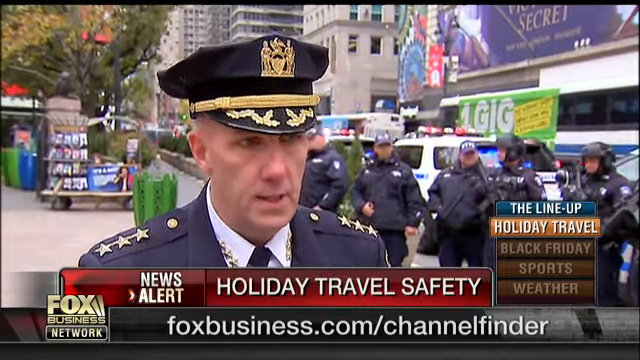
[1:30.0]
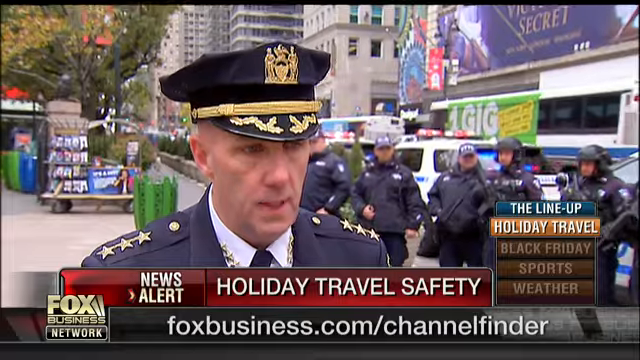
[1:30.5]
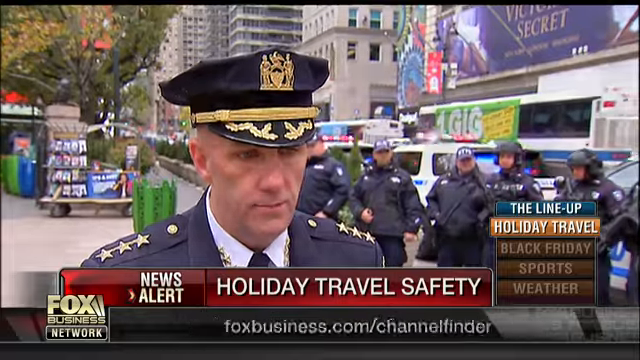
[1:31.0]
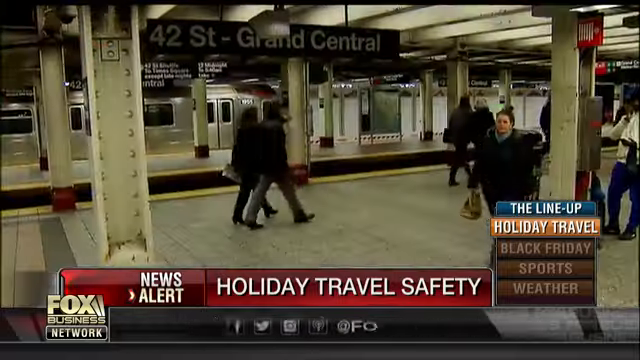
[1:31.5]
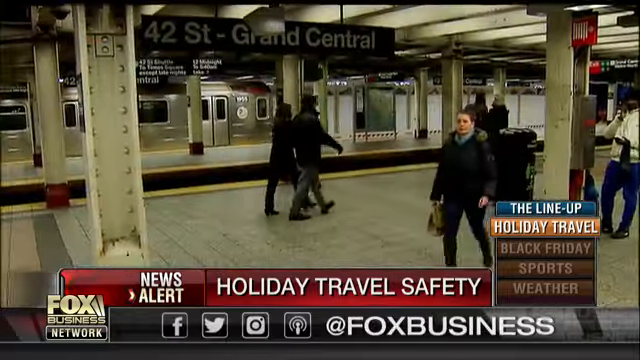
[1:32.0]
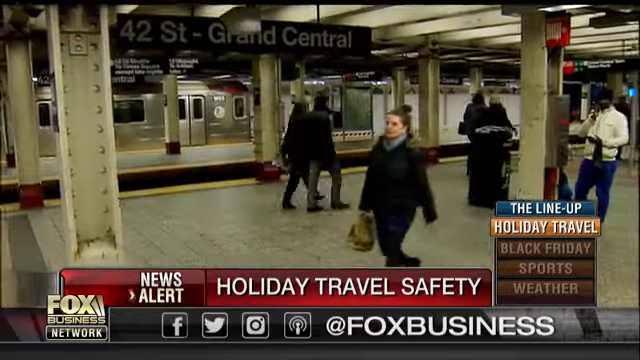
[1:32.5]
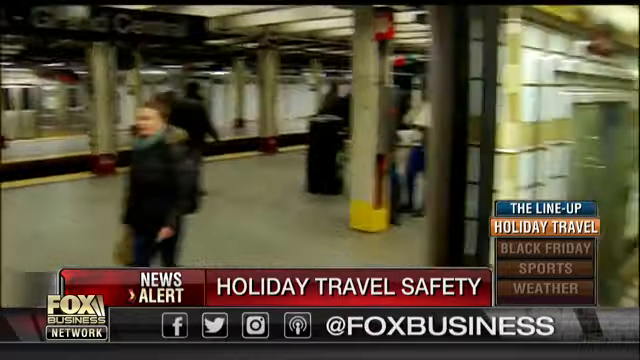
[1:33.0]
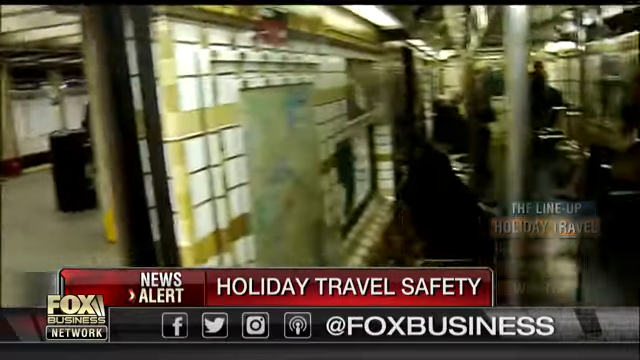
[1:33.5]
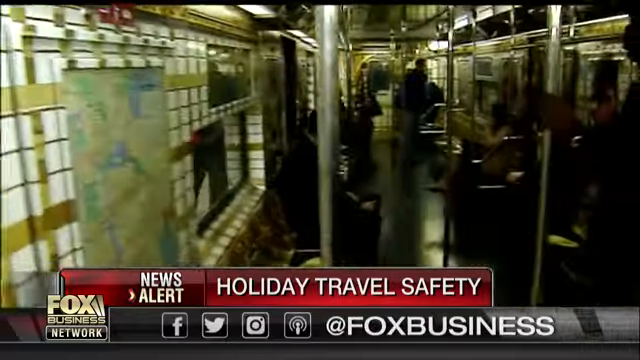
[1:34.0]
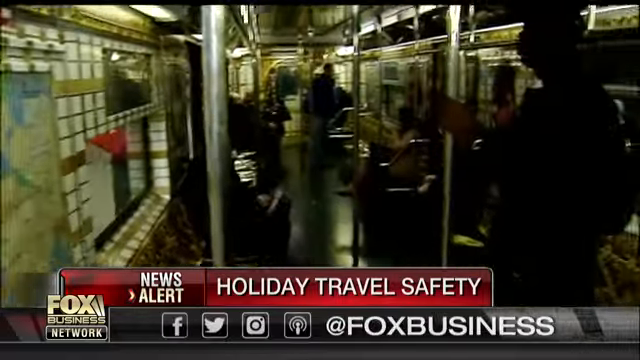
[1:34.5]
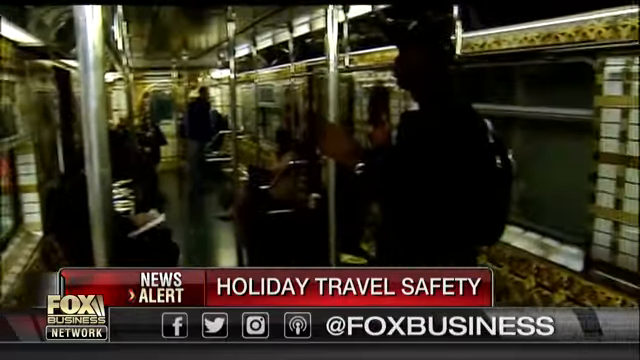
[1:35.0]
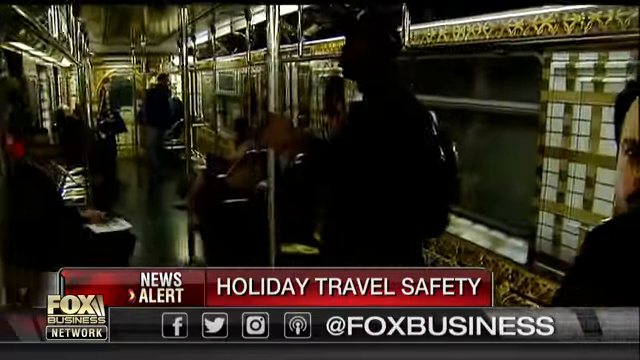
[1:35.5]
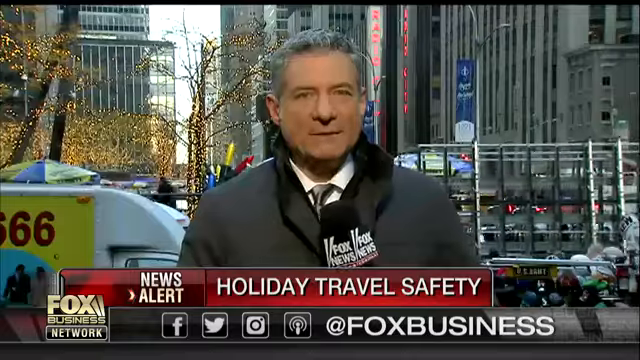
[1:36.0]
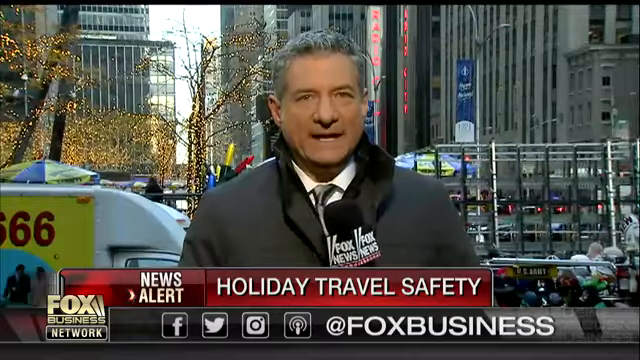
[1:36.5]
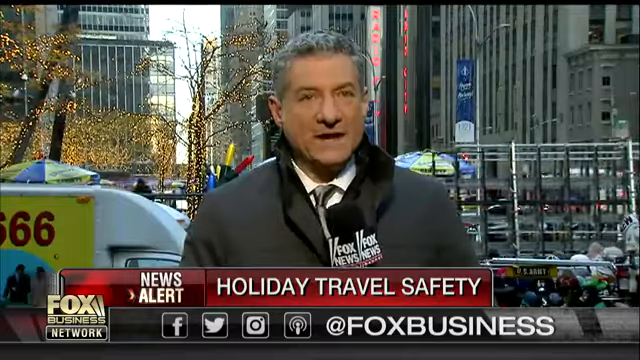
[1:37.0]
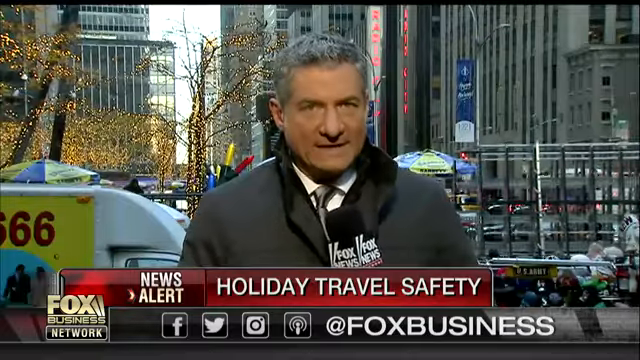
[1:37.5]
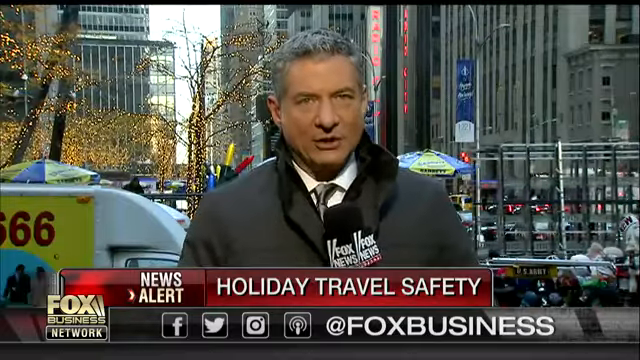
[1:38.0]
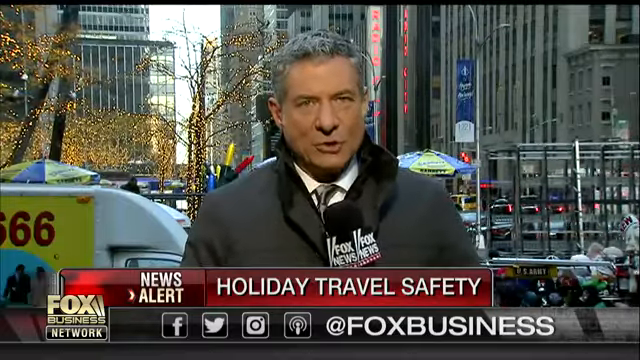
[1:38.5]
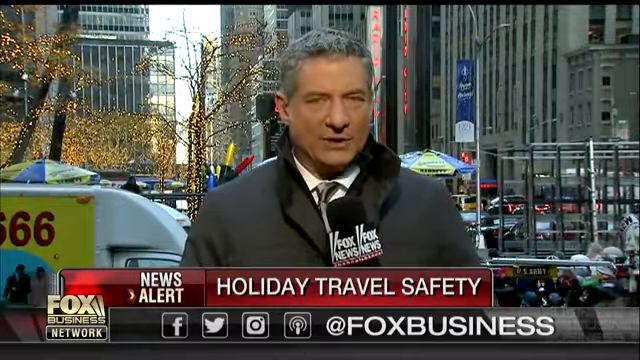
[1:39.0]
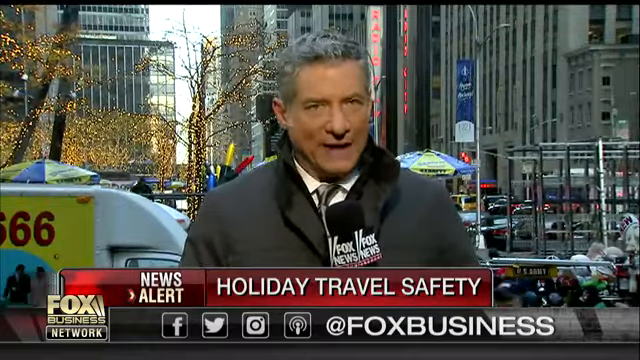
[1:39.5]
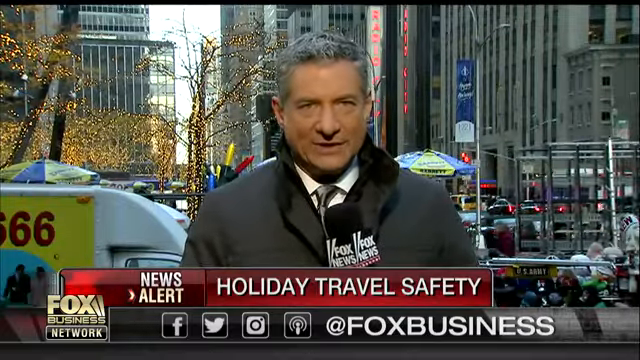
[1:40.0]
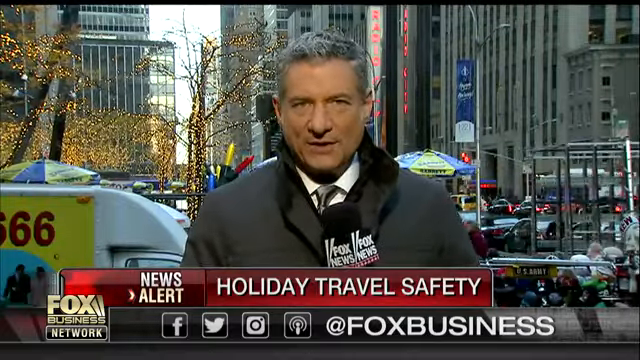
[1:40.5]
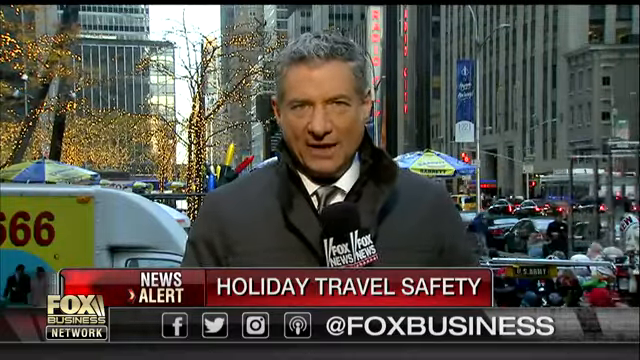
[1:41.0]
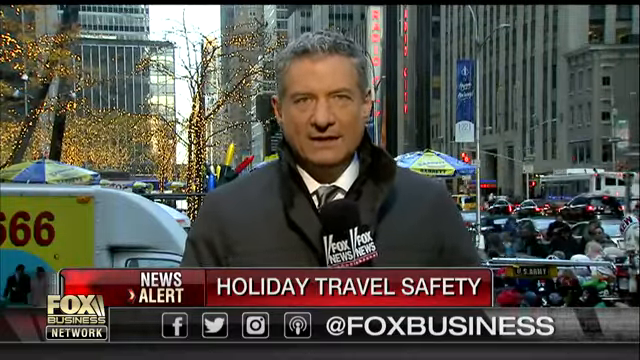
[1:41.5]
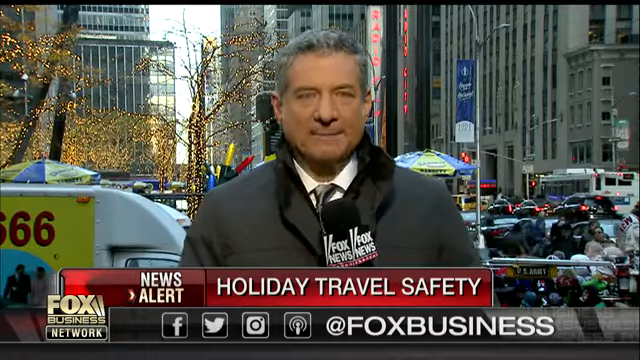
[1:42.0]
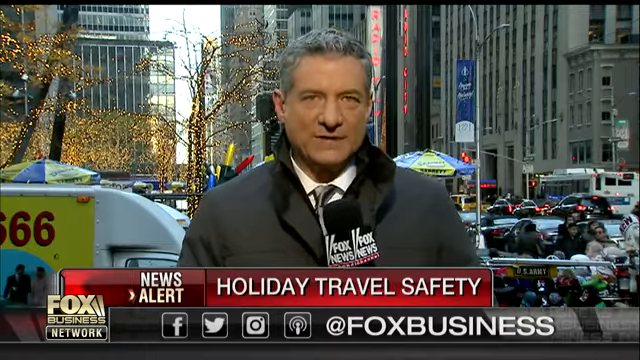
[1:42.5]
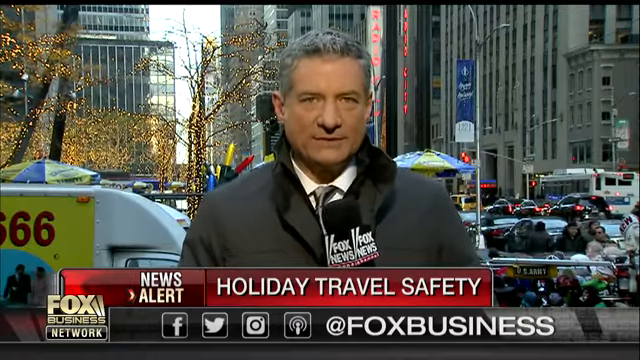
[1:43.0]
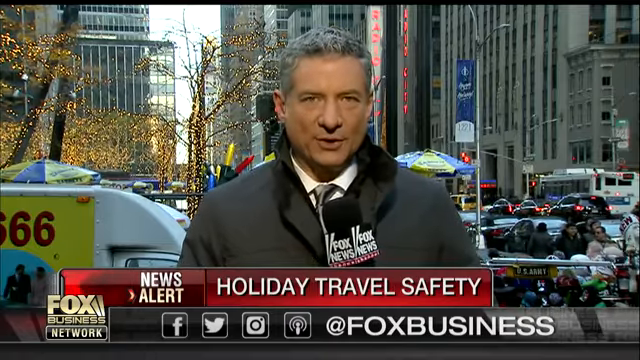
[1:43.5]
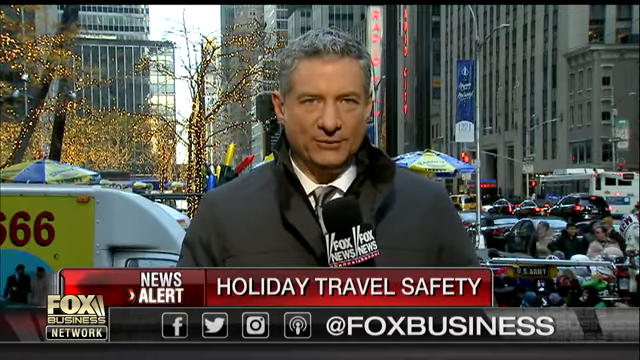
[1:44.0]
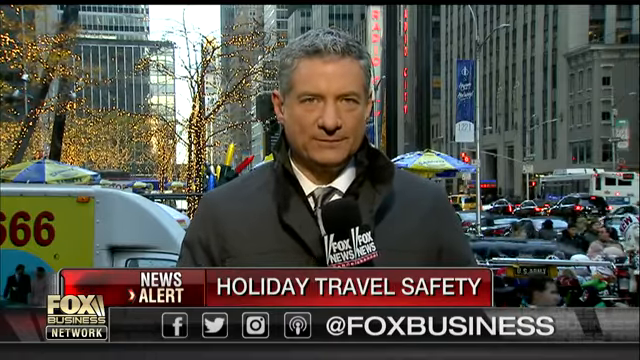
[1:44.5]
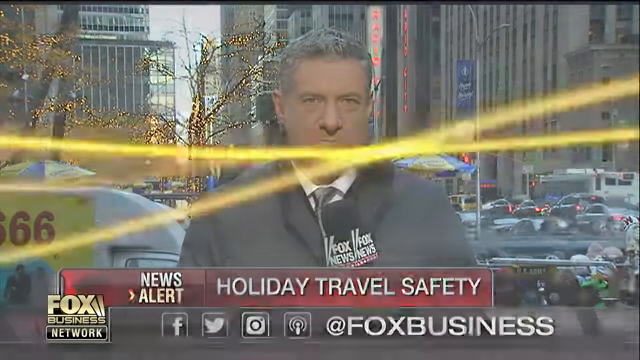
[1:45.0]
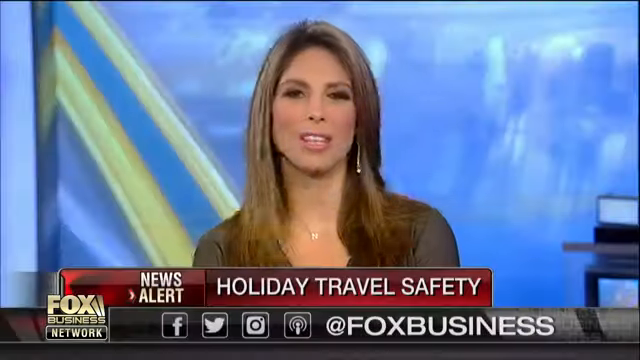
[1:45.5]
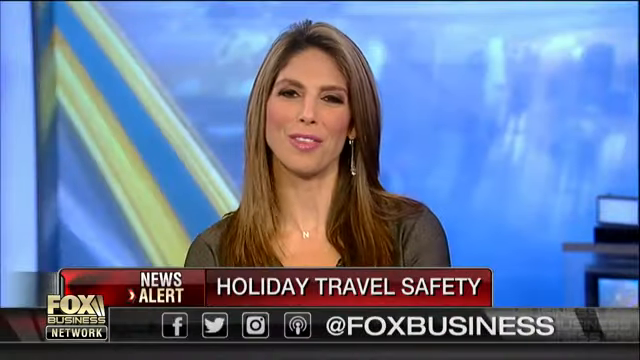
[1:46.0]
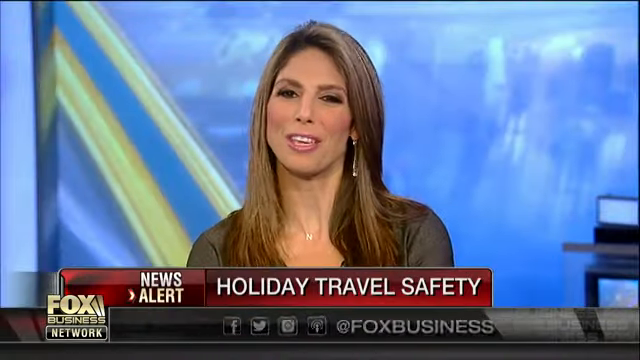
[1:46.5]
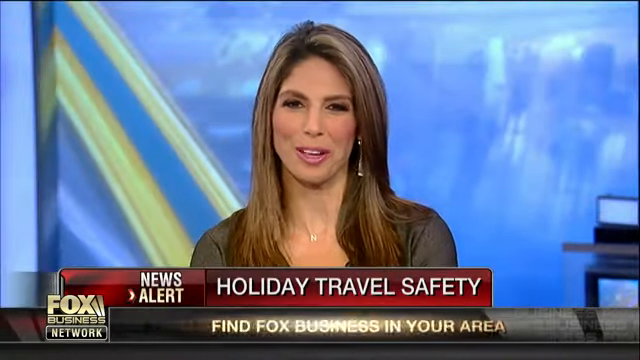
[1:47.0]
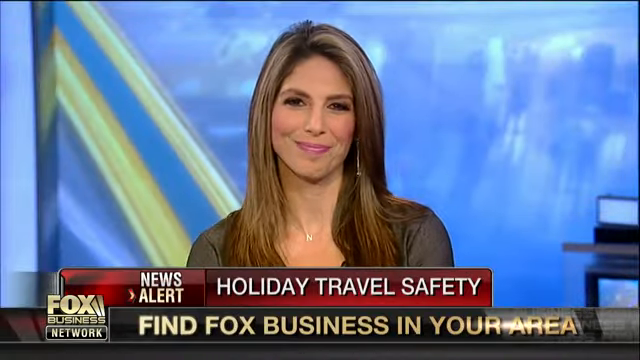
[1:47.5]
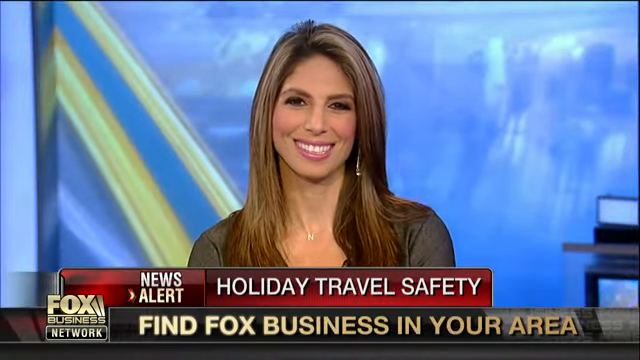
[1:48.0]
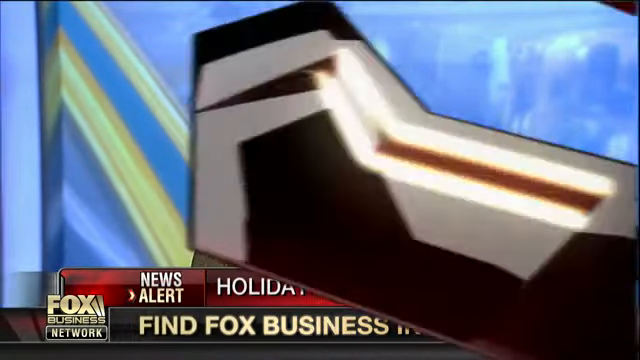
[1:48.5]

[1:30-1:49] An officer talks to the camera with New York City in the background and police cars lined up. The video cuts to the subway, showing people standing on the train. It then cuts to a news reporter for Fox News, with the screen reading "news alert holiday travel safety"; vehicles pass by and lots of people are in the background. The busy city street is shown, with some trees lit up with lights, possibly suggesting Christmas time. It cuts back to the original presenter, who has brown highlighted hair, perfect makeup and a nice smile, and wears a gold necklace with an N on it; the background is mainly blue with two yellow lines. Finally the red Fox News logo appears on the screen.